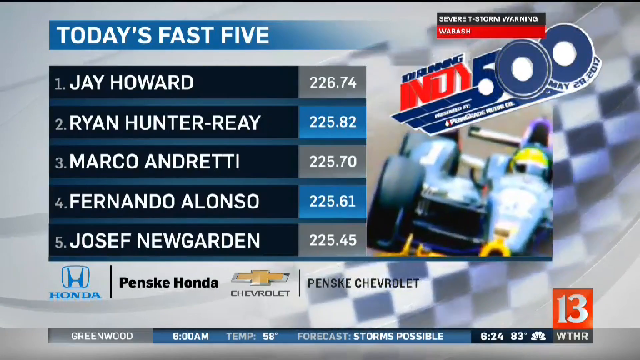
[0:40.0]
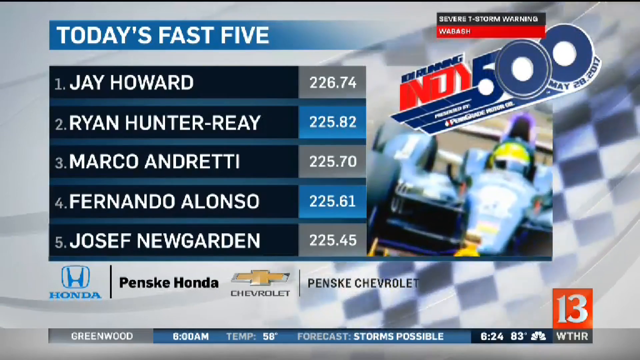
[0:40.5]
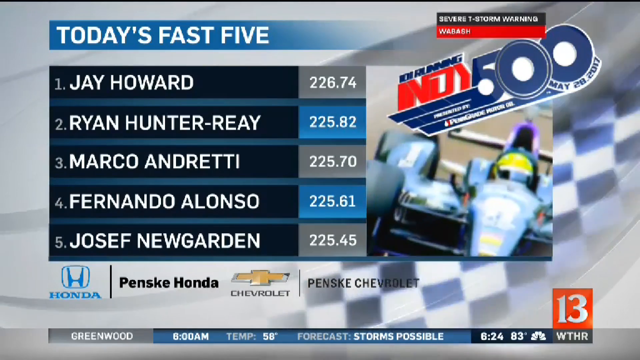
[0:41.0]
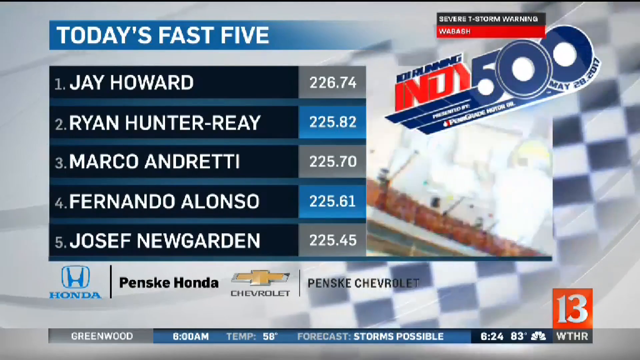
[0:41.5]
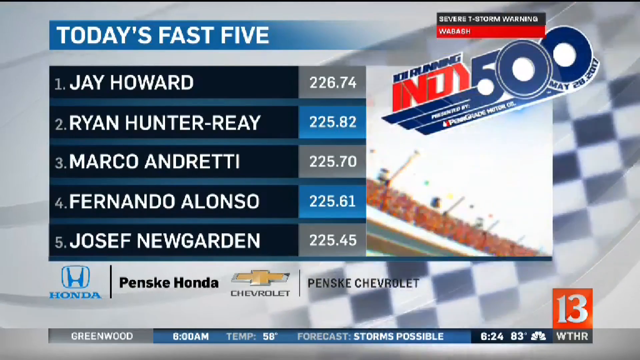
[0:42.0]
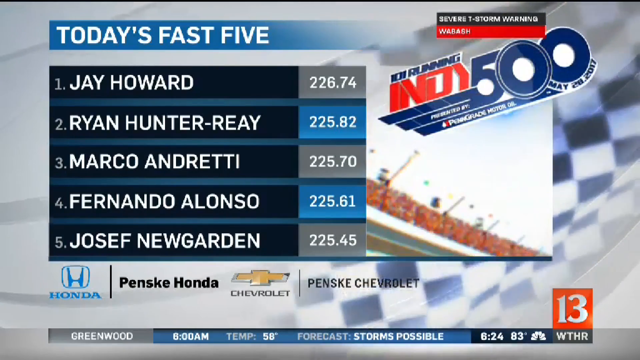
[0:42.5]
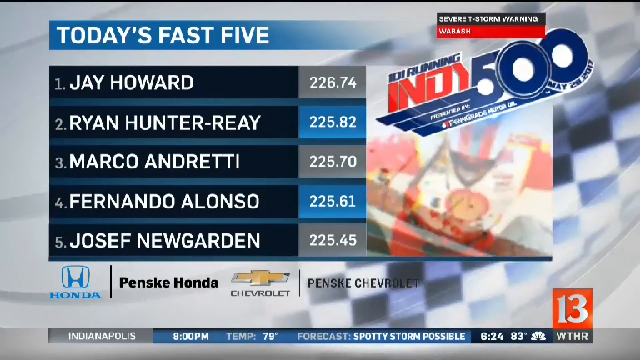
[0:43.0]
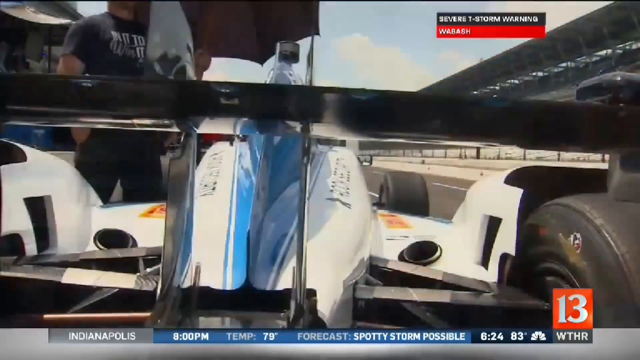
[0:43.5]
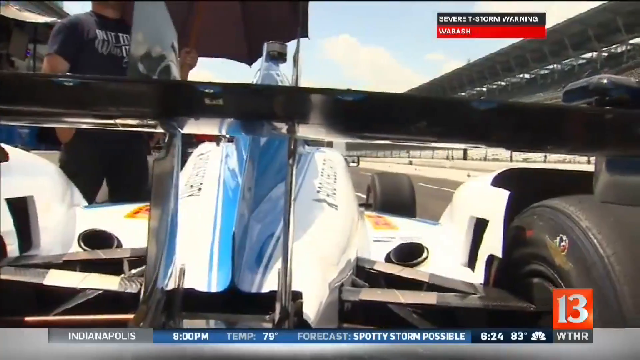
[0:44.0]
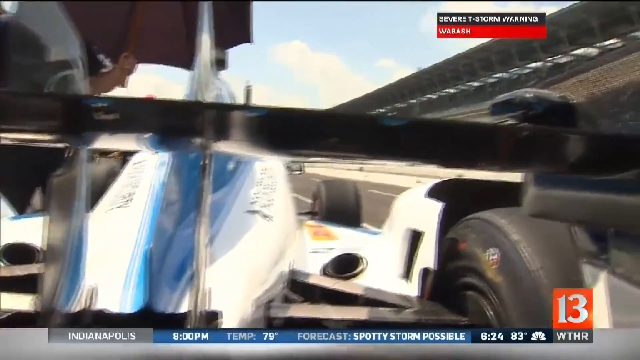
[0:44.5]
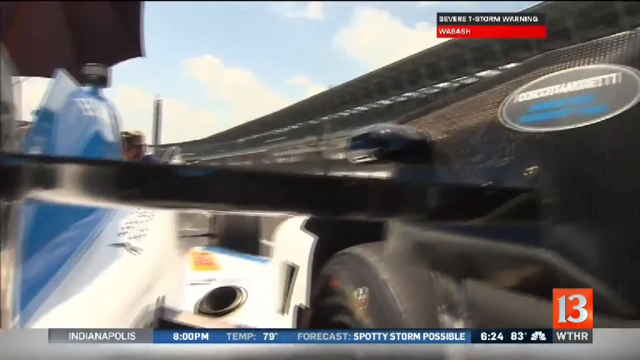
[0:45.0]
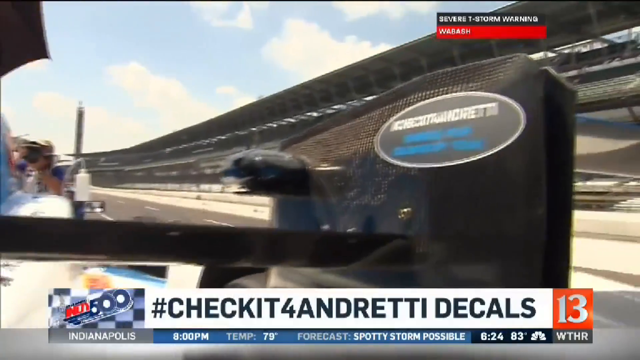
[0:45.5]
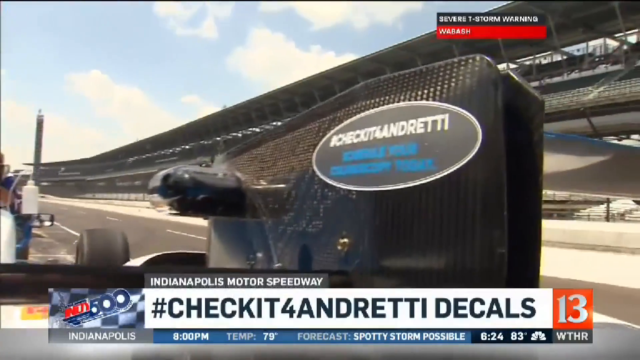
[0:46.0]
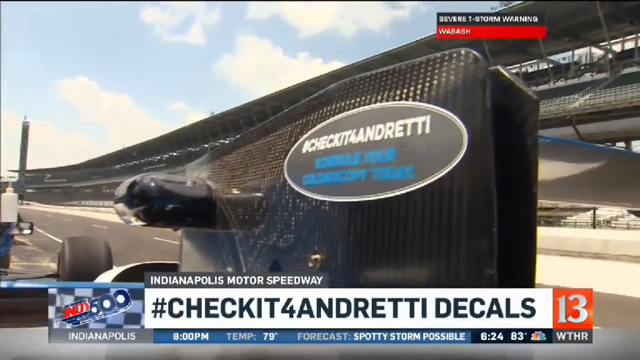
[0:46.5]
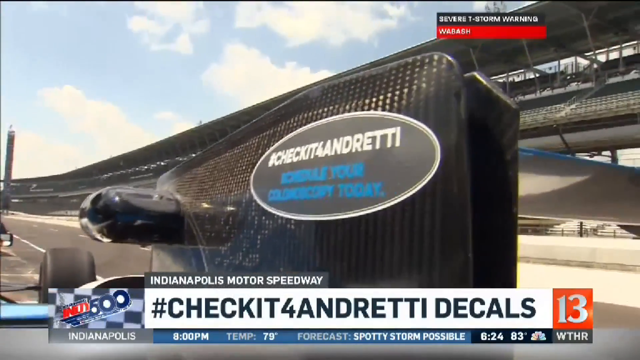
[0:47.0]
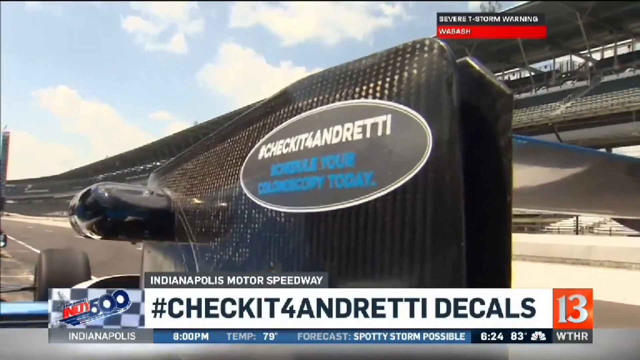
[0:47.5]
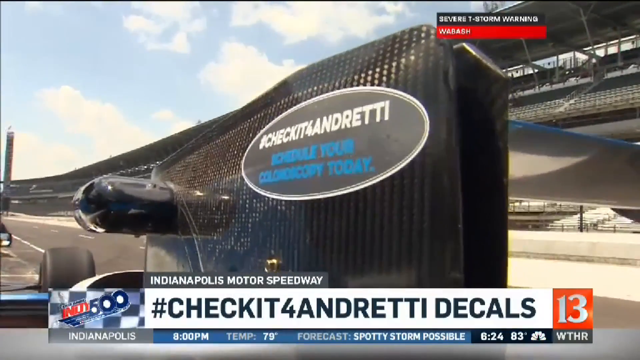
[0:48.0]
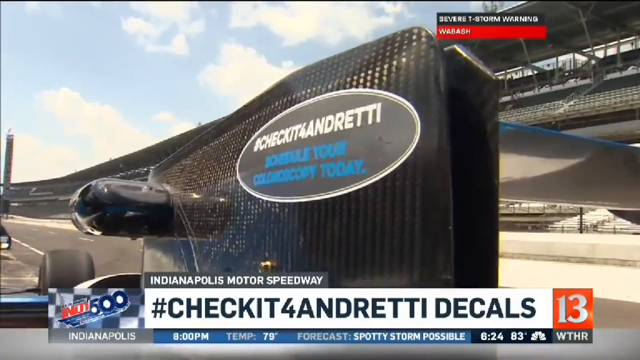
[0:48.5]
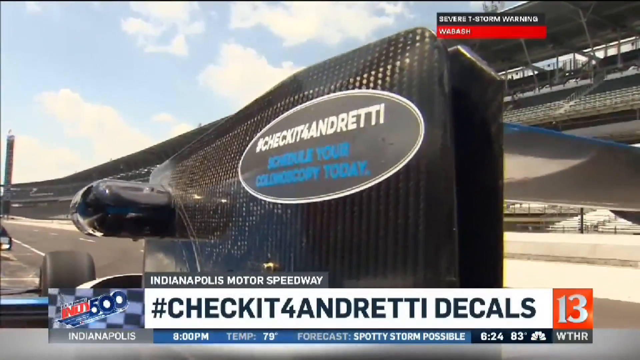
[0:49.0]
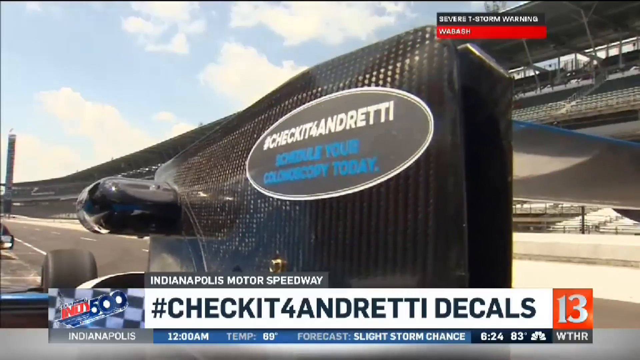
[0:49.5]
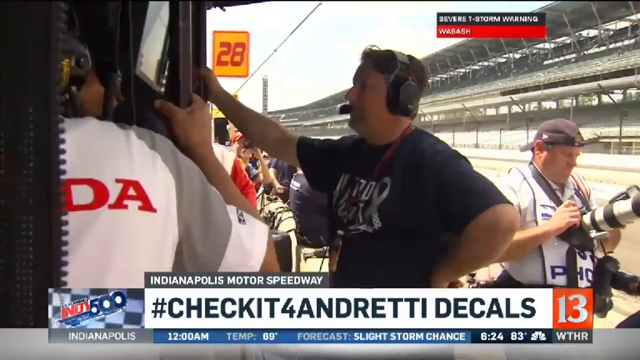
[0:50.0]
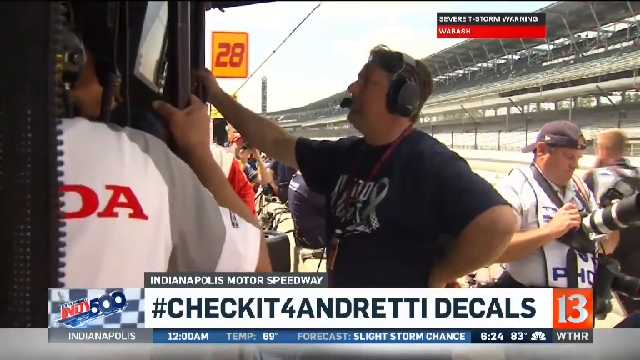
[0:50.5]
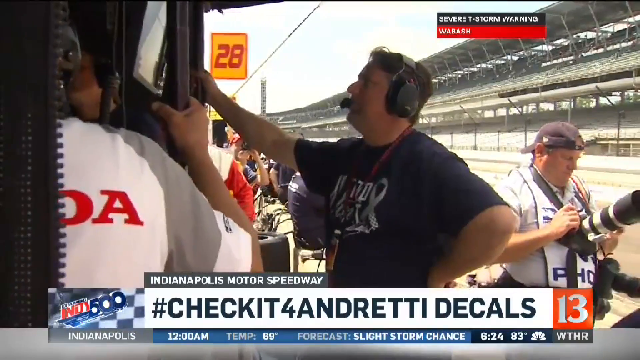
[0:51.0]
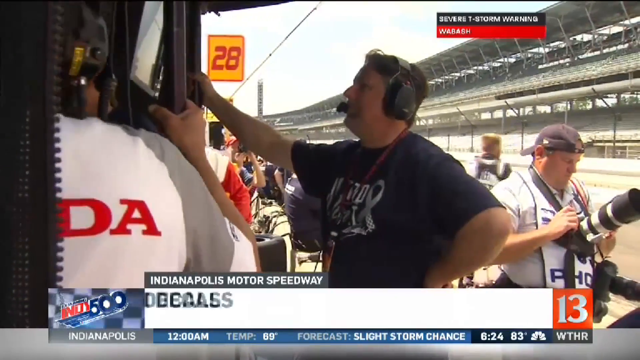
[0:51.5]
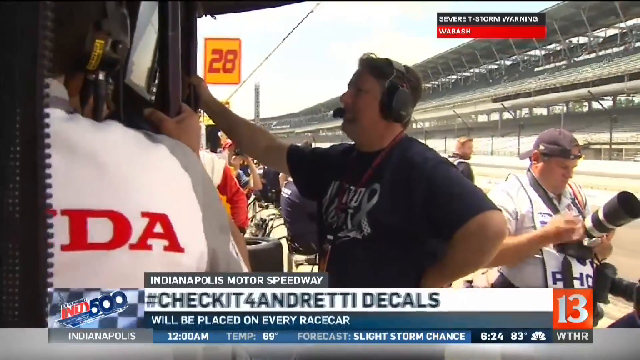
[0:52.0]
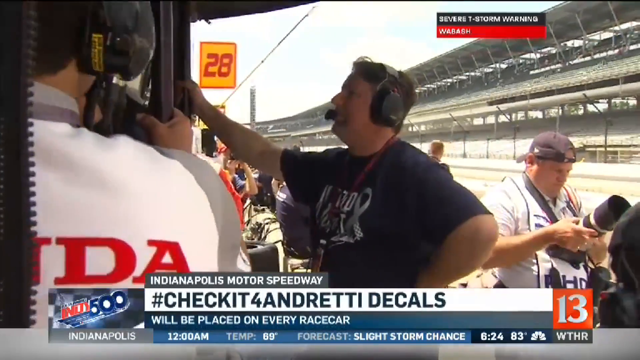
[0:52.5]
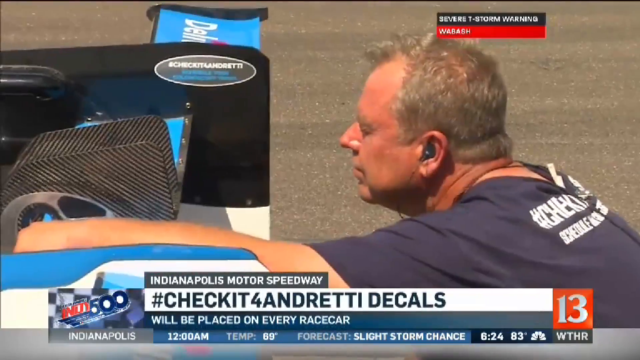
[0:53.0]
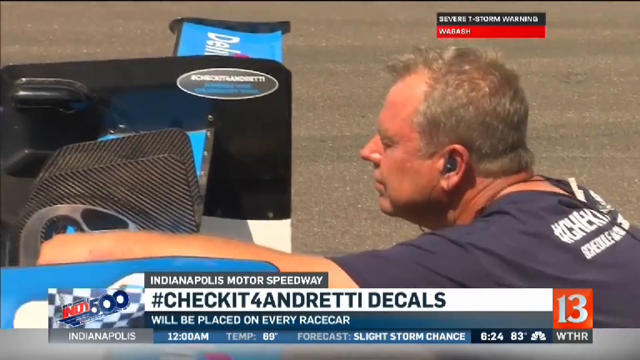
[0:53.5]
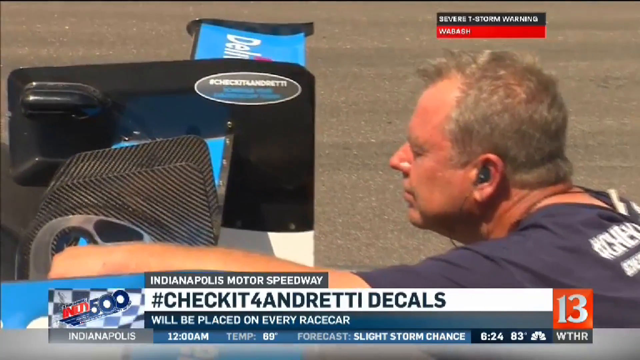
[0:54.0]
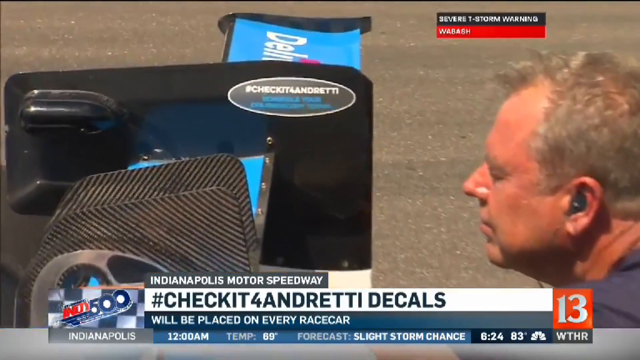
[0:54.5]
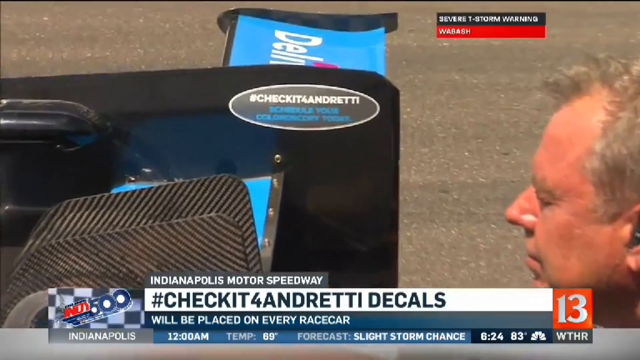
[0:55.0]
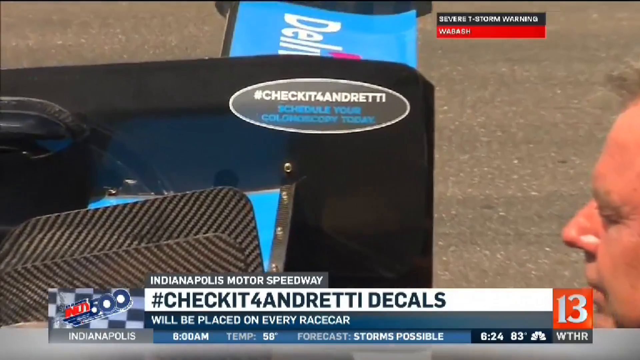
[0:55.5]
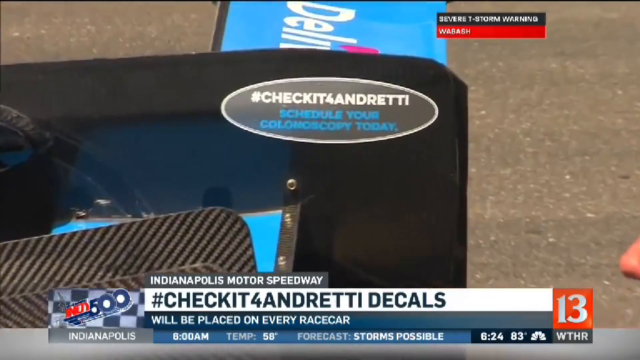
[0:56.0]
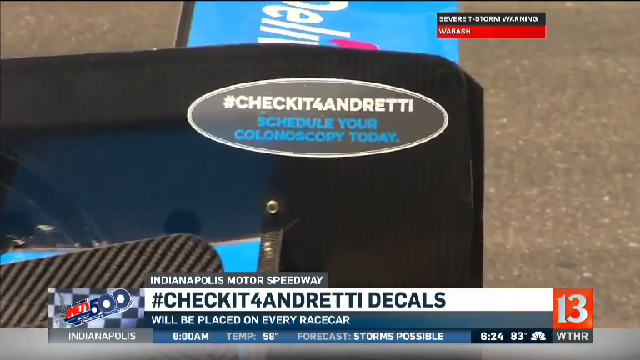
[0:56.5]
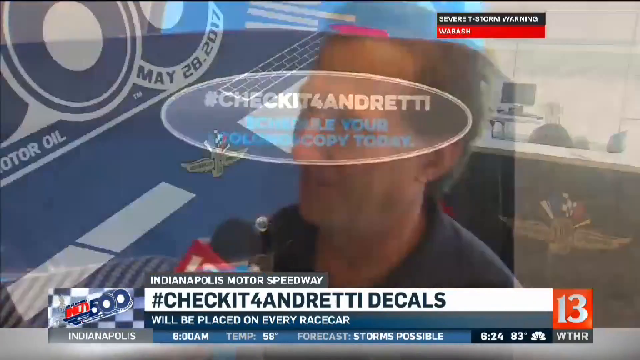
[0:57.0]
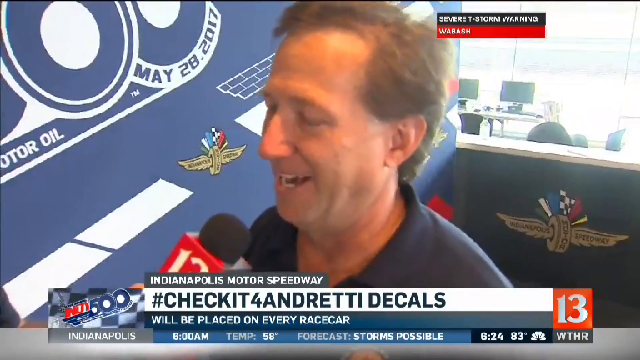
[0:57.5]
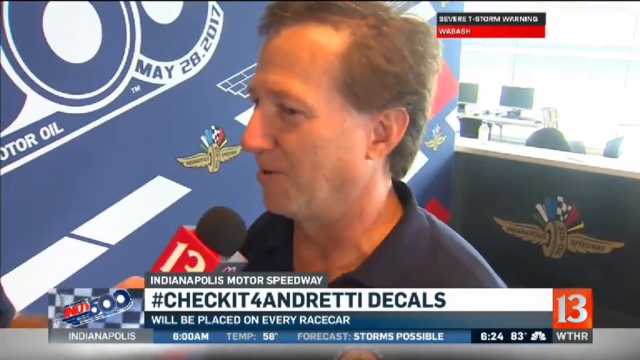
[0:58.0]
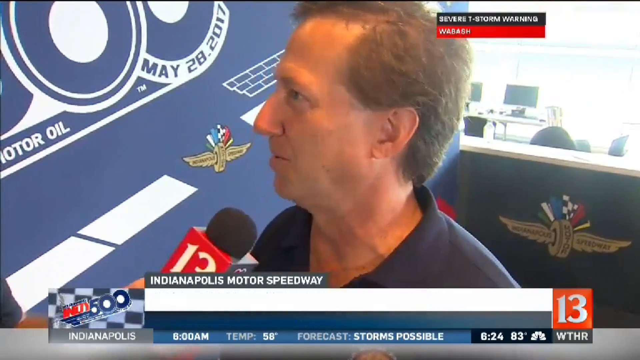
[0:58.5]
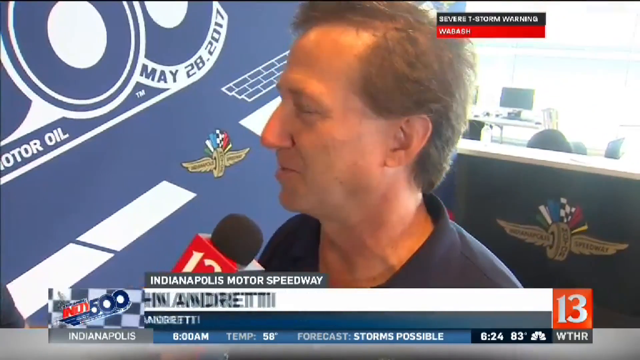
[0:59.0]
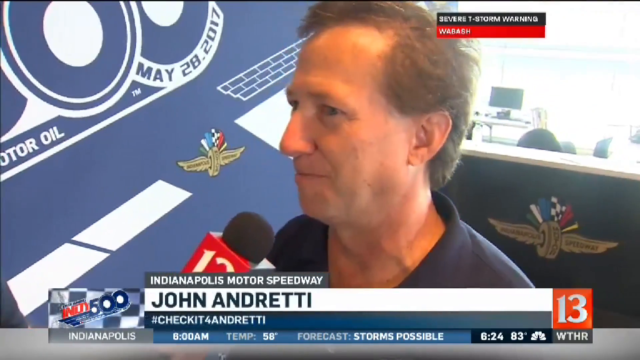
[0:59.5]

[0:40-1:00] Today's Fast 5 drivers are shown: first Jay Howard with a time of 2.26.74, second Ryan Hunter-Reay with 2.25.82, third Marco Andretti with 2.25.70, fourth Fernando Alonso with 2.25.61 and fifth Josef Newgarden with 2.25.45, sponsored by Honda and Chevrolet. A new video then gives a close-up look at Andretti's car as the banner changes to a caption reading "#checkit4Andretti". What appear to be team members of one of the car teams are shown: one man in a dark blue shirt looks at a screen, and another wears a white Honda shirt. Then a man in another blue shirt leans onto the car that says "#checkit4Andretti", and the video ends with John Andretti giving some sort of interview.